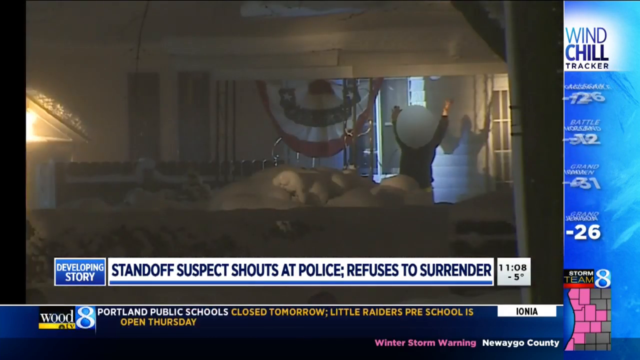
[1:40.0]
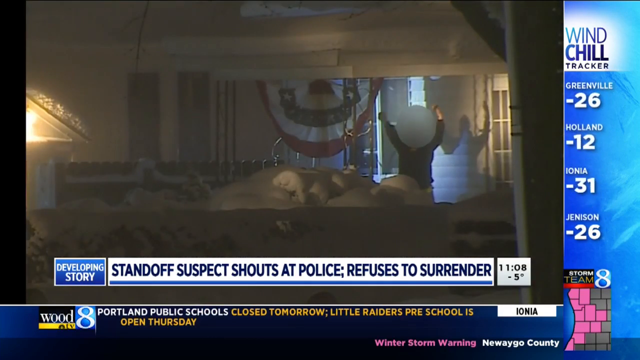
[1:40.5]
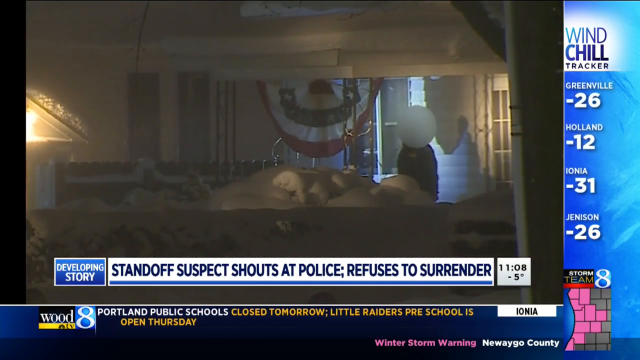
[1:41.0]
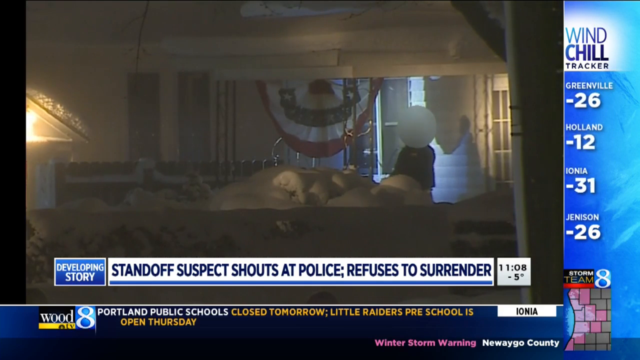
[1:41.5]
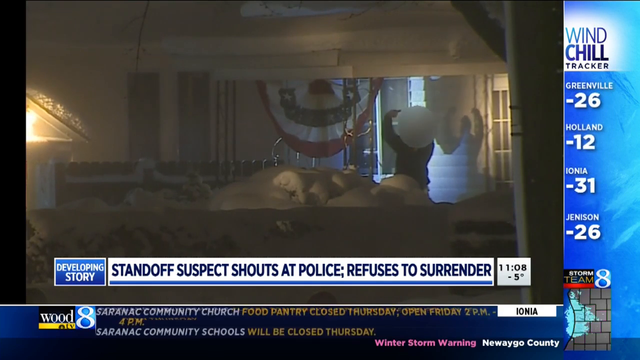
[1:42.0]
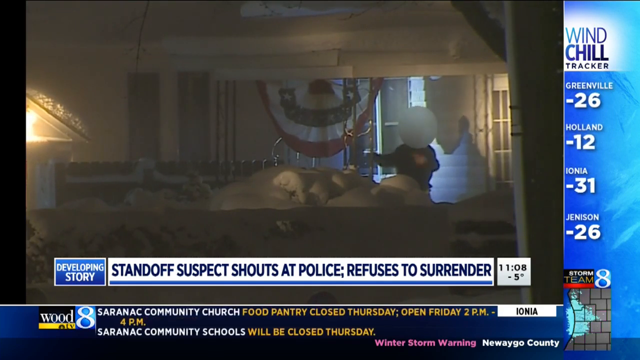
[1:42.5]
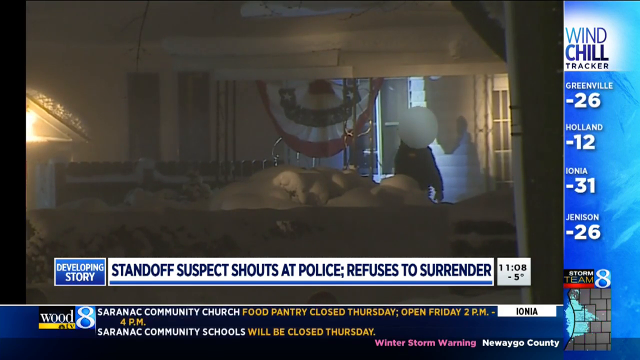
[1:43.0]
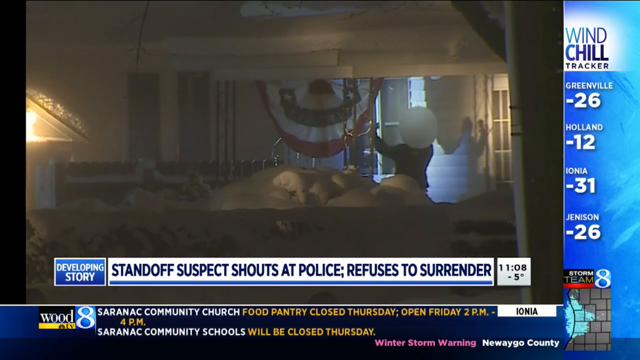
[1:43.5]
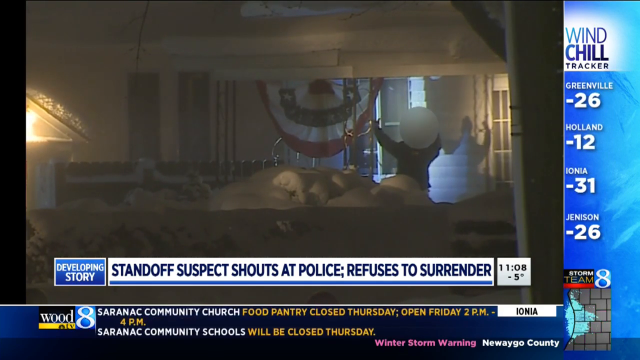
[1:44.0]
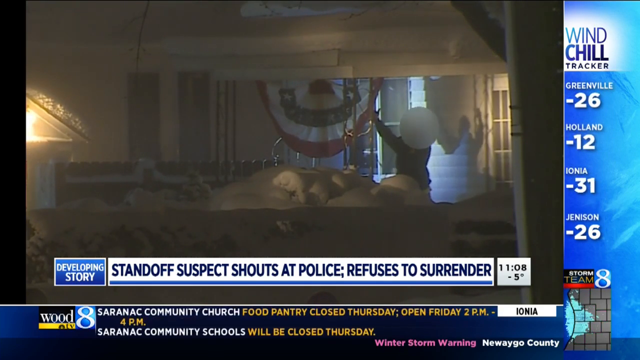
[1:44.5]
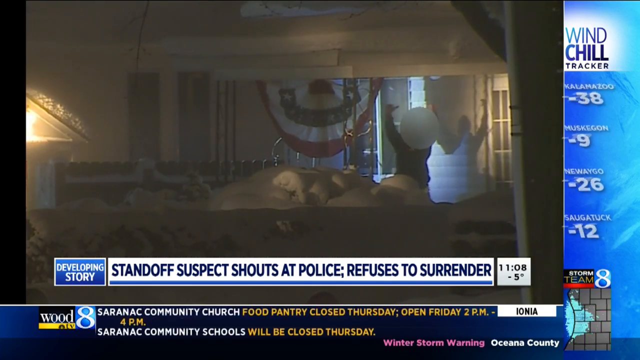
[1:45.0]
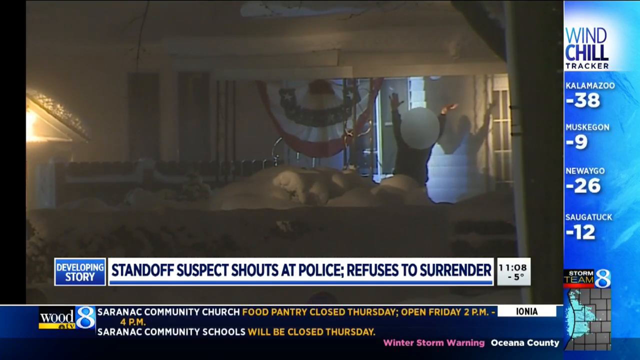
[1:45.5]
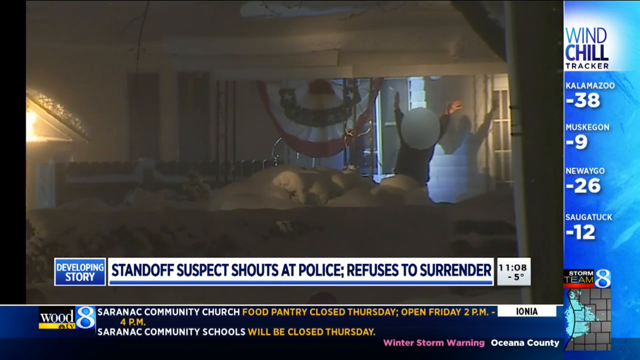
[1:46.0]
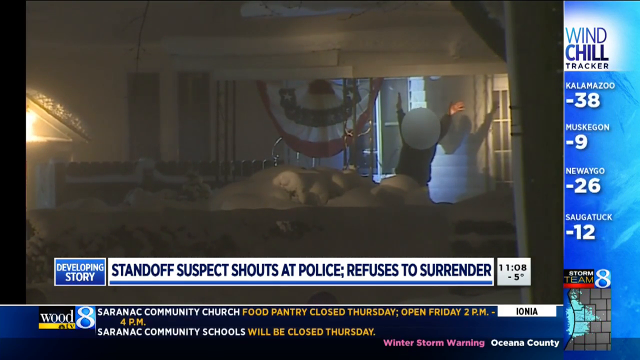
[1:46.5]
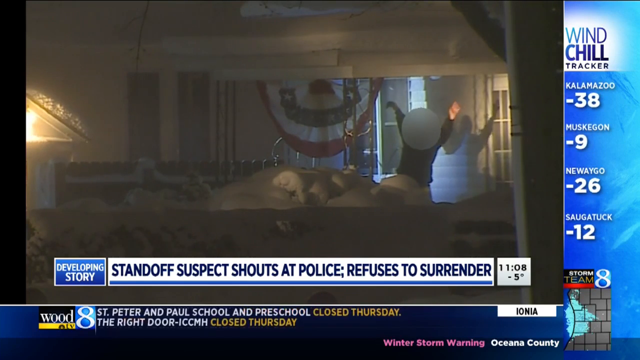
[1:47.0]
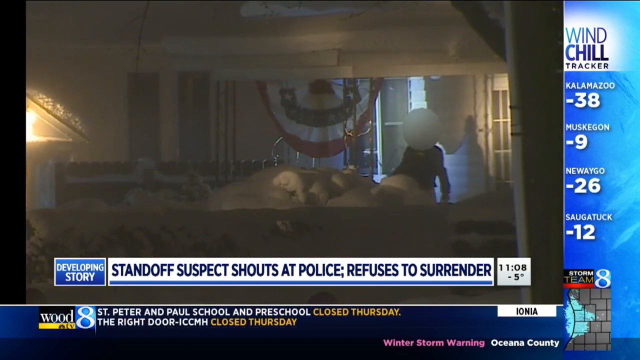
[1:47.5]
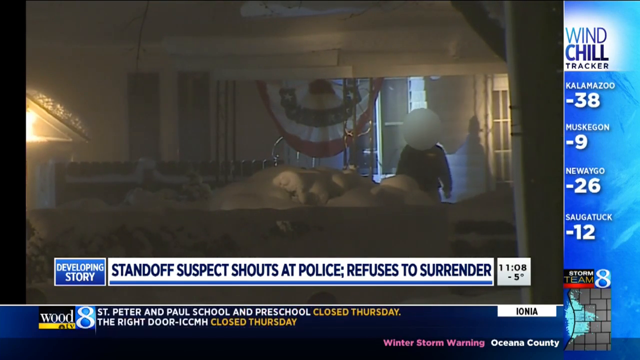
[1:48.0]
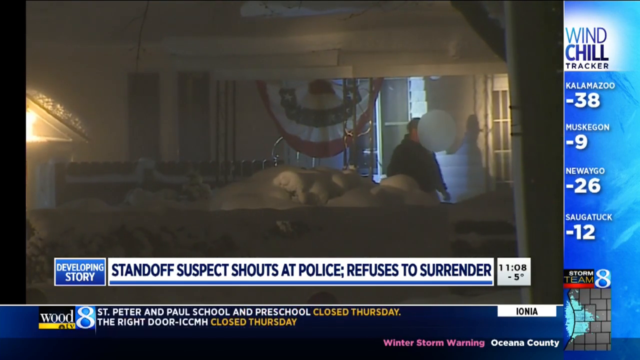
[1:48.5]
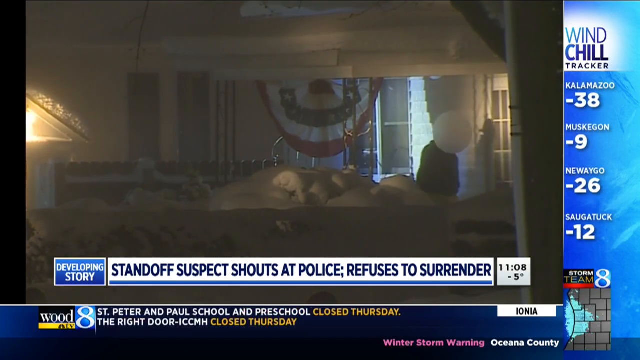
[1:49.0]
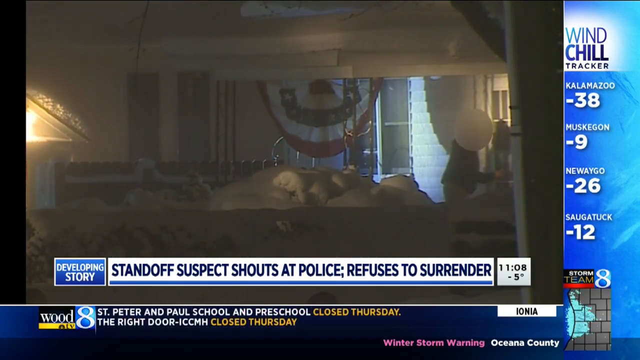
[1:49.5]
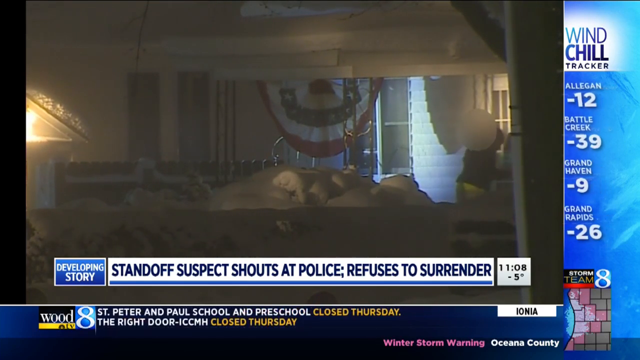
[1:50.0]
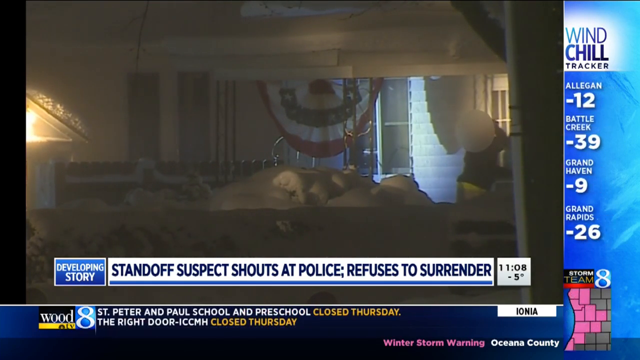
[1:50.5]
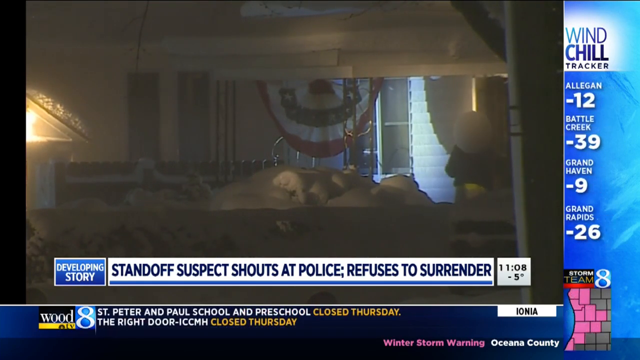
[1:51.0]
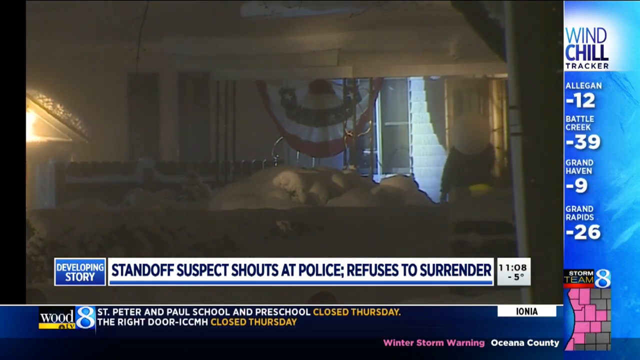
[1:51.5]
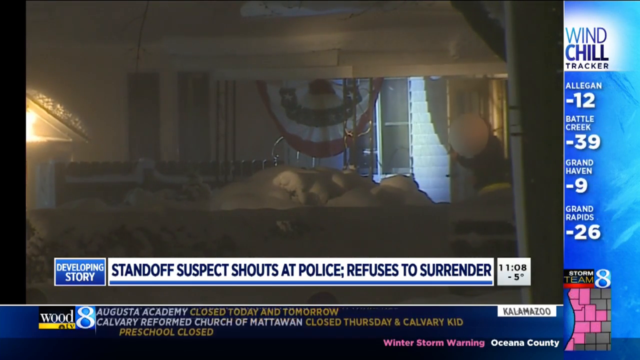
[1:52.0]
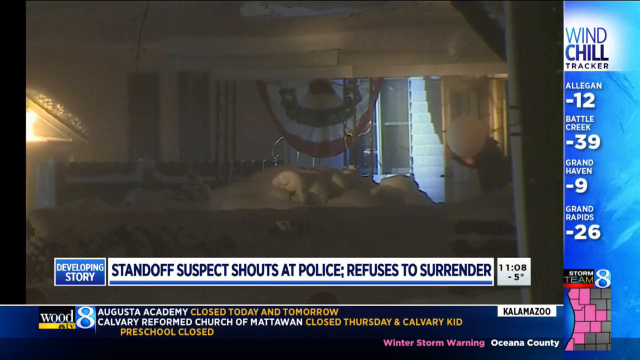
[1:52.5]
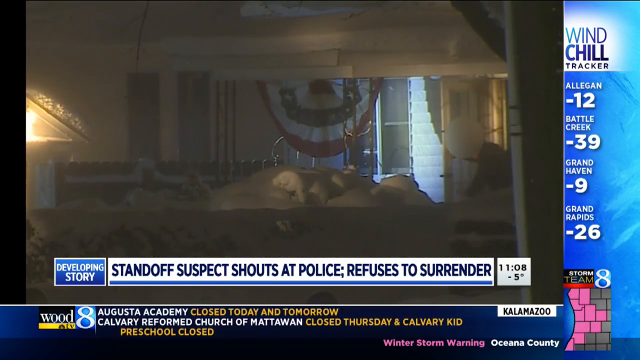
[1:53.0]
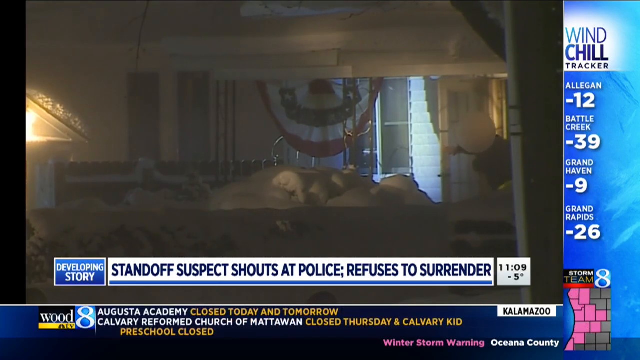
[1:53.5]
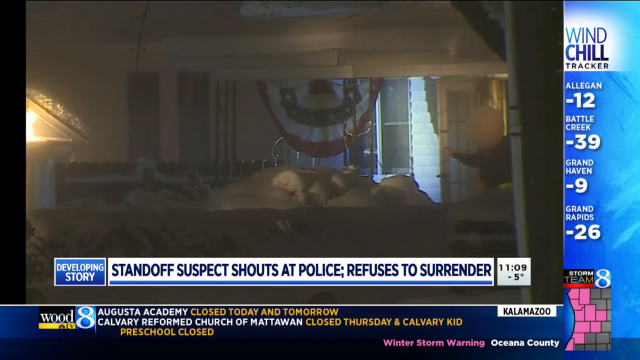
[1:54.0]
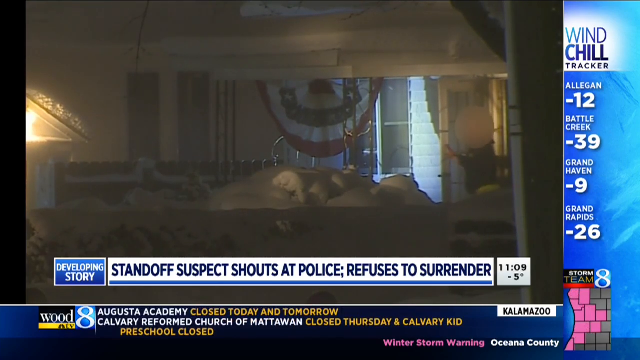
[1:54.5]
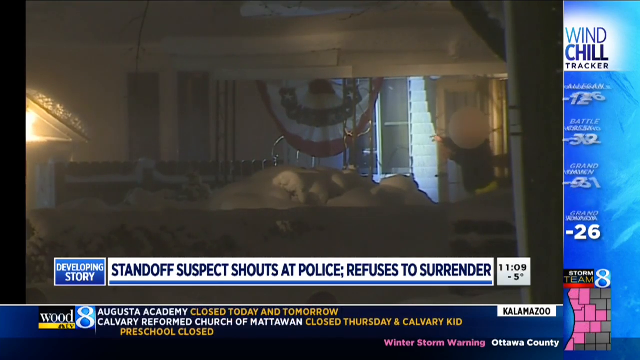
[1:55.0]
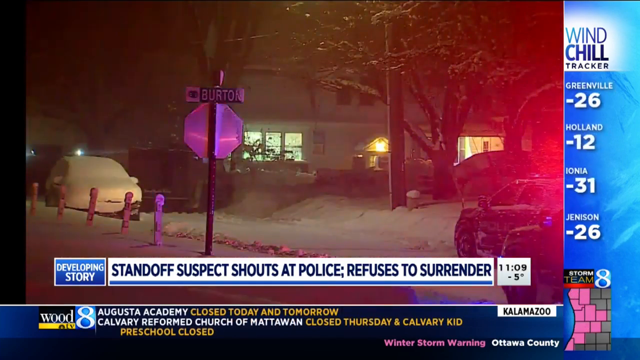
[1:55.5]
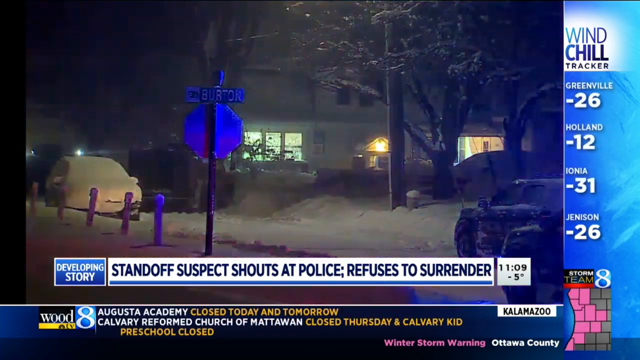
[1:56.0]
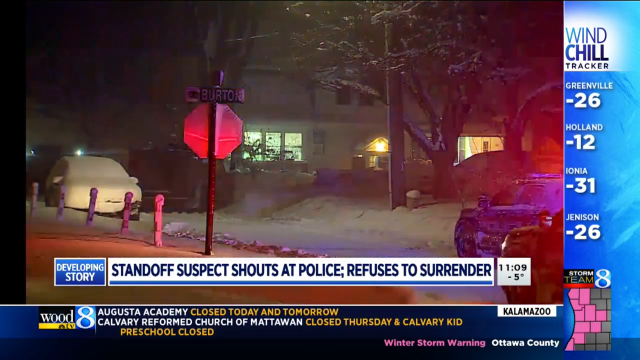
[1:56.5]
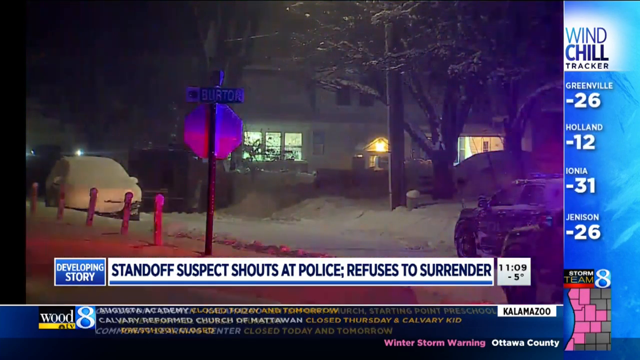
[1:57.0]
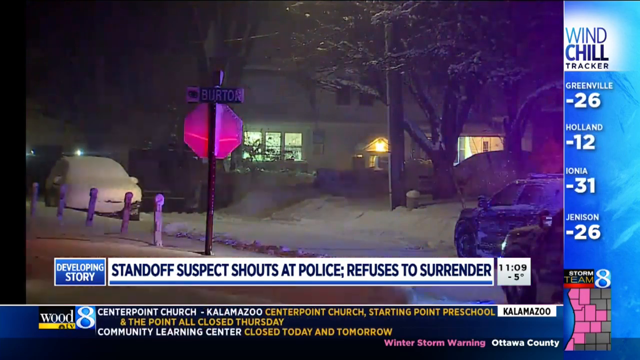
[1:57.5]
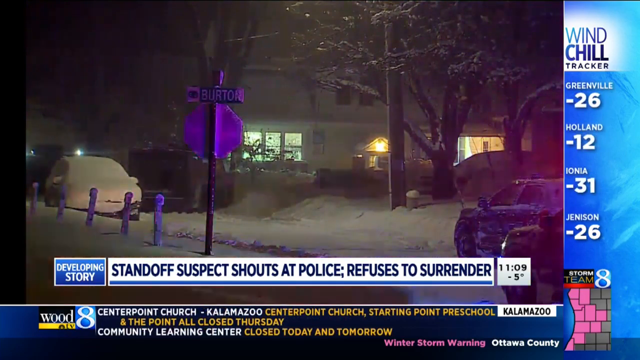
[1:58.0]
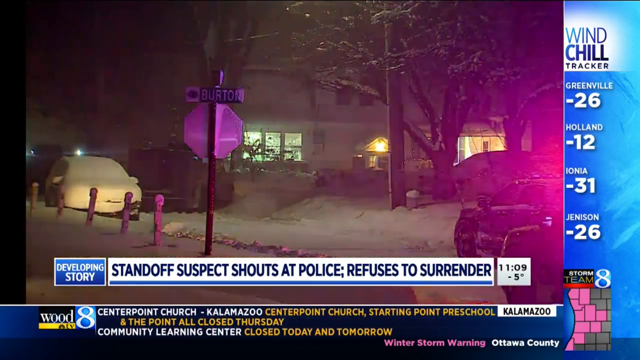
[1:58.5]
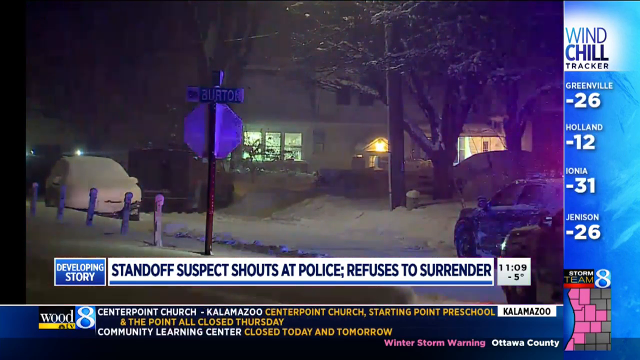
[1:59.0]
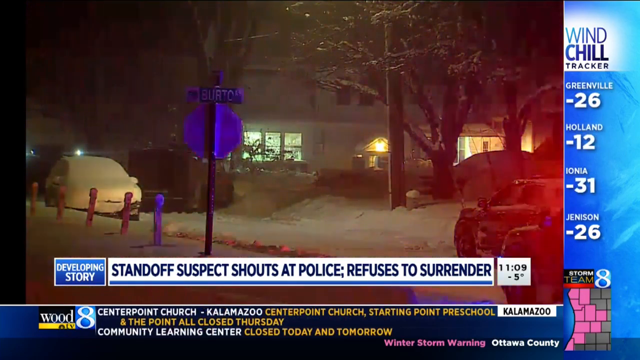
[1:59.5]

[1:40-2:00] The man stands outside, reaching his hands very high over his head again and again. He then goes back inside, holding the door open and leaning on it before stepping back in. His hands are stretched with palms out and fingers spread. His face stays blurred the entire time, though near the end the blur slips a little near the back of his head. The same flag, lamp and reflections are visible. The bottom of the screen shows additional information about schools in the area closing because of the weather. The video then returns to the outside of his house, with snow everywhere and police cars still there. The bottom of the screen mentions a winter storm warning, and a small radar-type map in the bottom corner shows the areas most affected. A street name is visible at an intersection: a street called "Burton" and another street whose name cannot be read, apparently posted on a stop sign. One car, looking like a small car, possibly a coupe, is completely covered in snow, while another car has less snow on it.